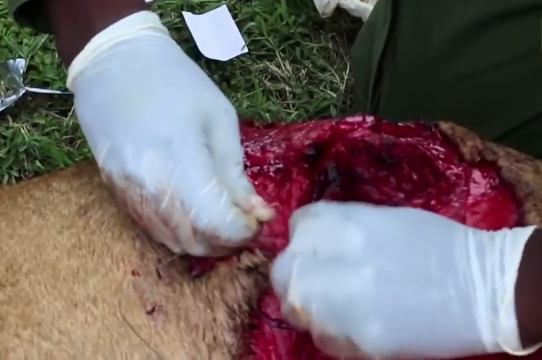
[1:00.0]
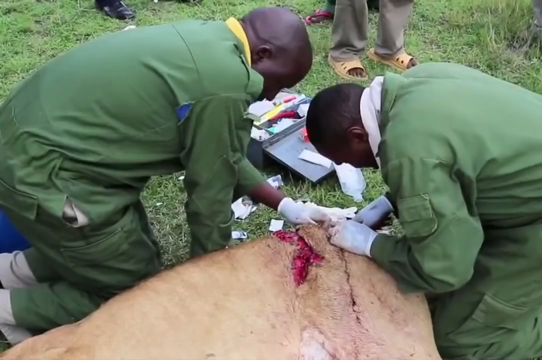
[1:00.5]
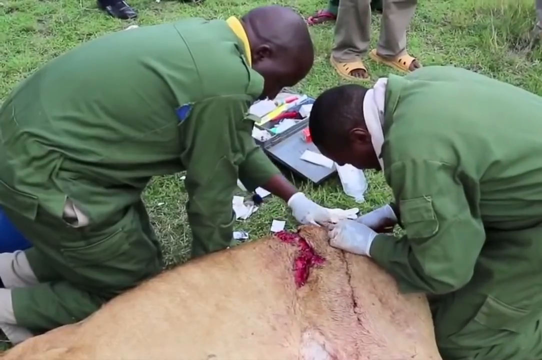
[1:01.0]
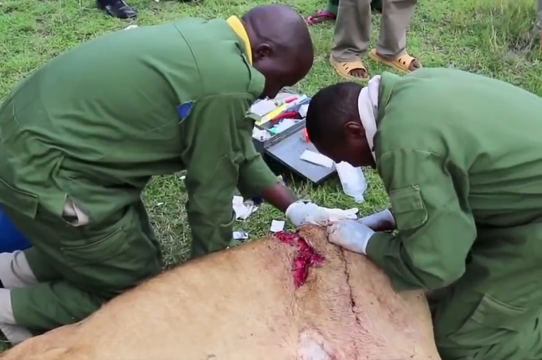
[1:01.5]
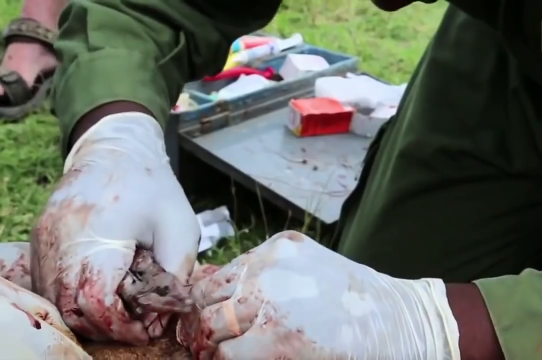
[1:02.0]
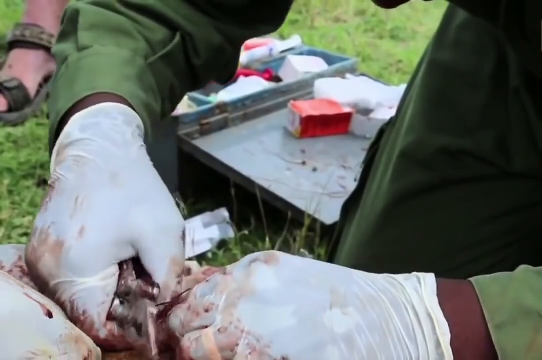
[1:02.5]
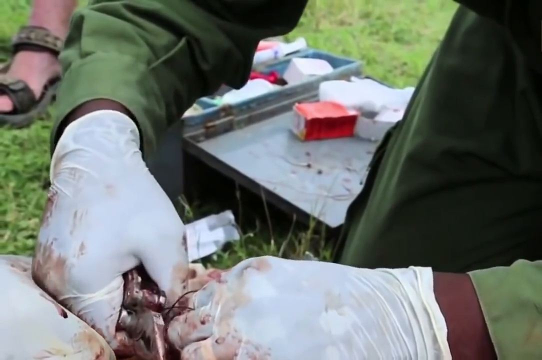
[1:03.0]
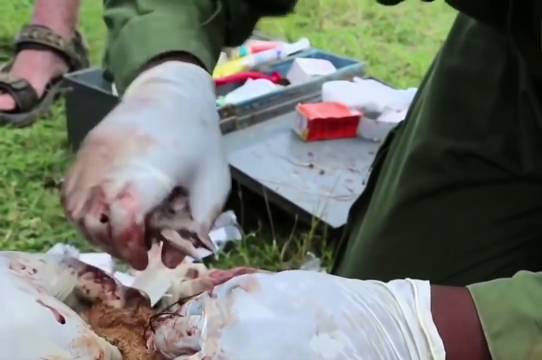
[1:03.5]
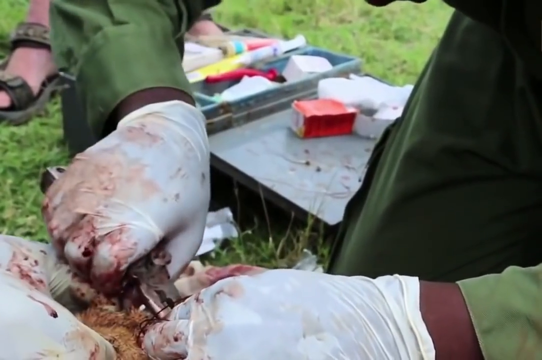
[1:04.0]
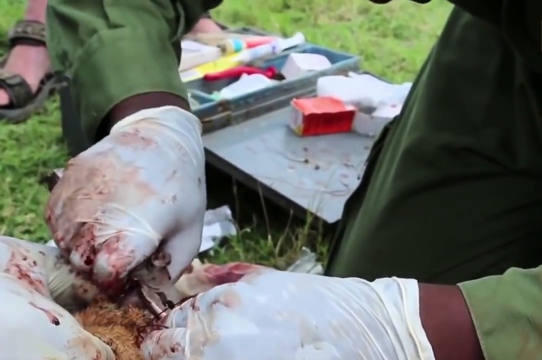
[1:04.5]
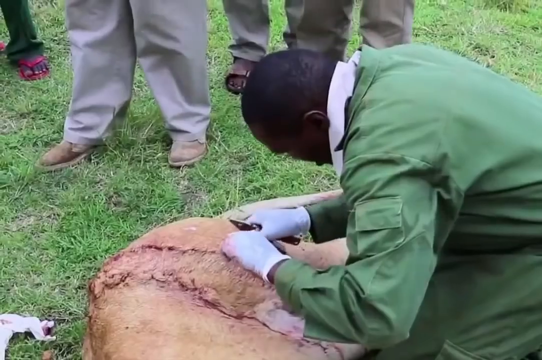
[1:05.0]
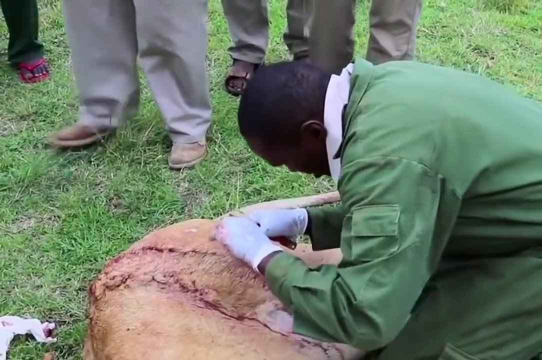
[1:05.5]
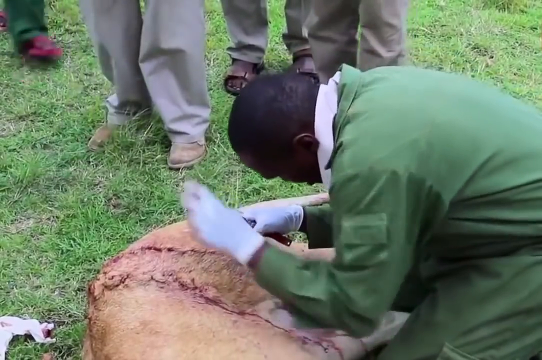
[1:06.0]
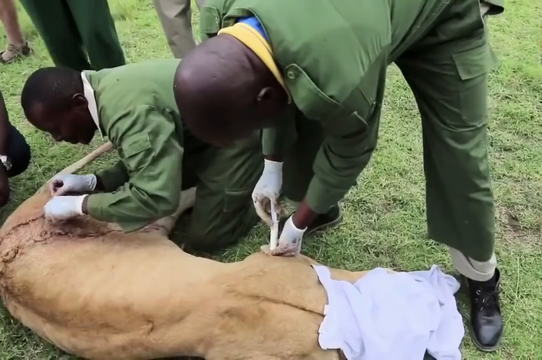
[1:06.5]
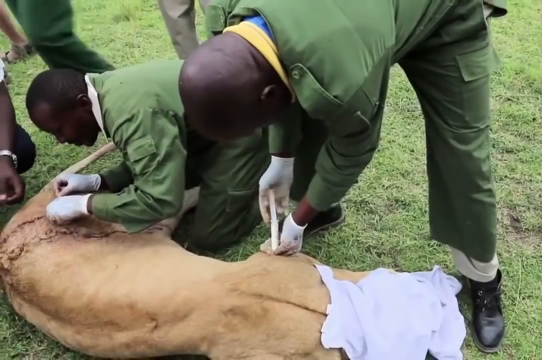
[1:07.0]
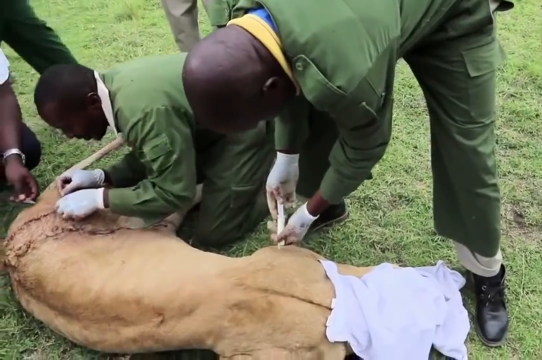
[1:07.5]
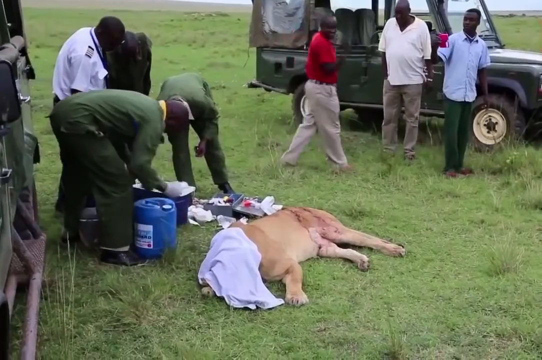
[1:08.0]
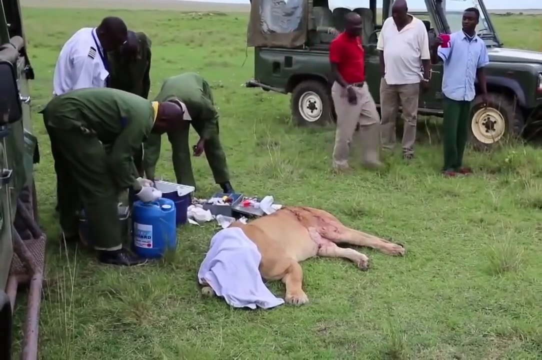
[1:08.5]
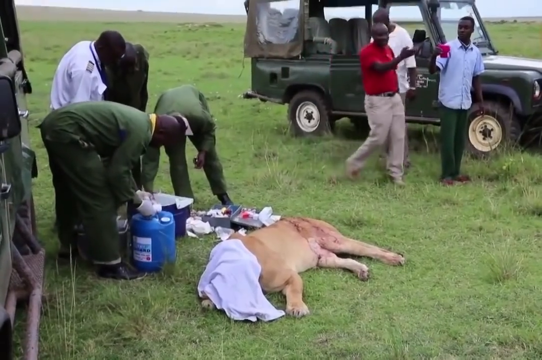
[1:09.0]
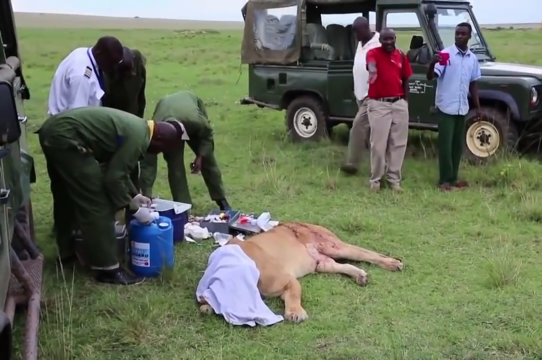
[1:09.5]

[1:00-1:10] One officer in green operates on the open wound of the lion, which lies down with its head covered. He finishes, and the wound is sealed, with another officer in green assisting him. Other men in different kinds of clothing stand nearby: three stand next to one car and four stand next to the other car. One officer injects something into the lioness. Afterward, they take their materials back to their boxes, and the lion is shown lying down with its wound operated on. The officers work with their gloves on.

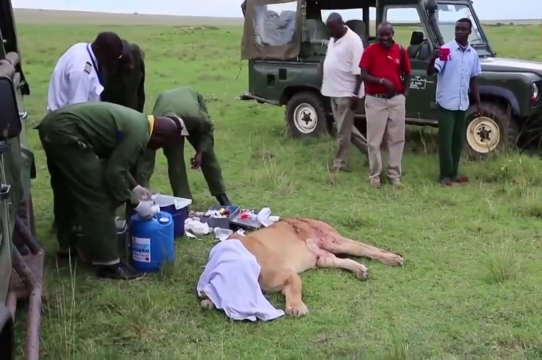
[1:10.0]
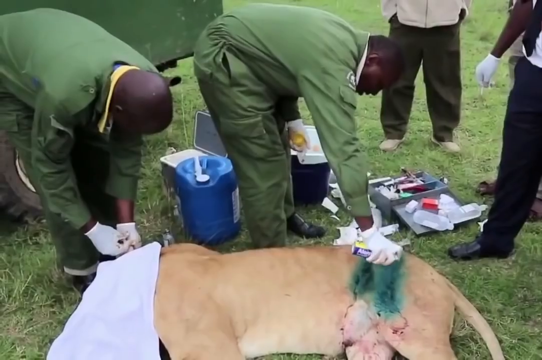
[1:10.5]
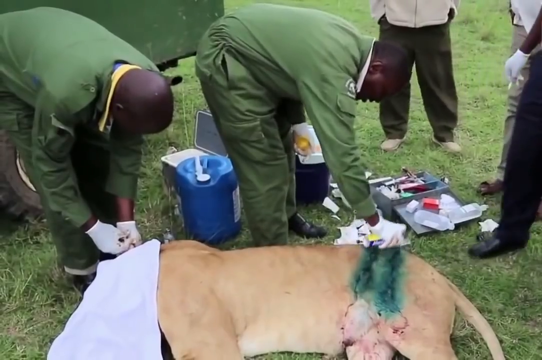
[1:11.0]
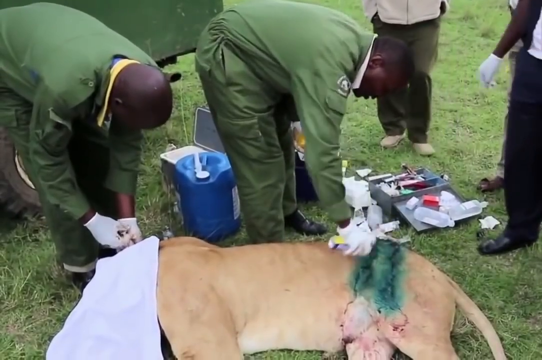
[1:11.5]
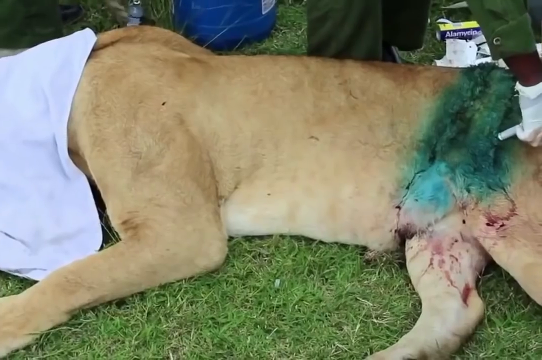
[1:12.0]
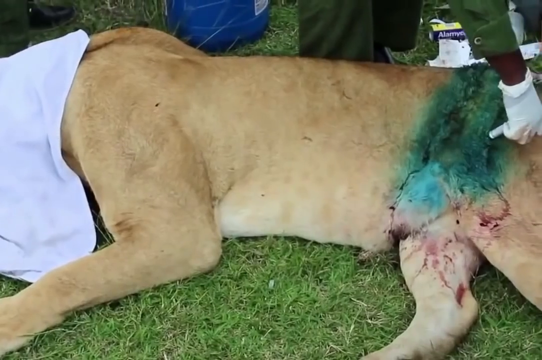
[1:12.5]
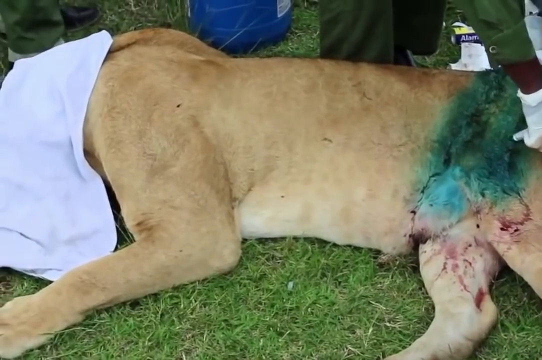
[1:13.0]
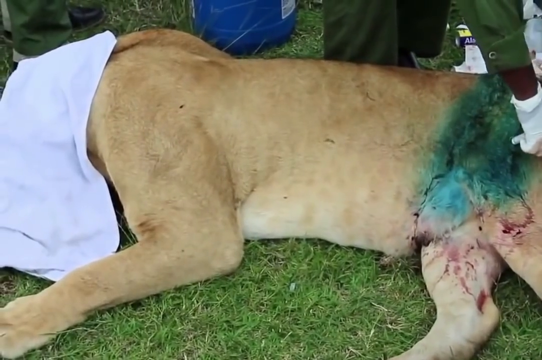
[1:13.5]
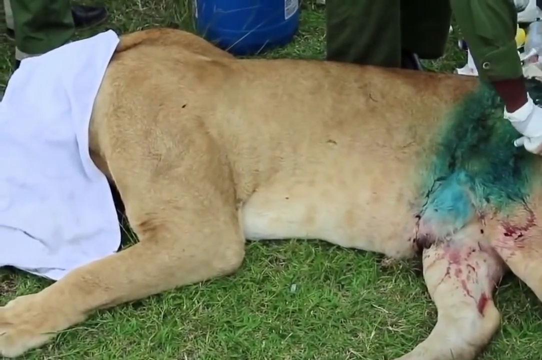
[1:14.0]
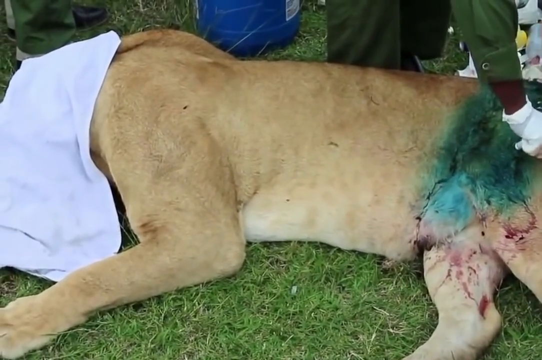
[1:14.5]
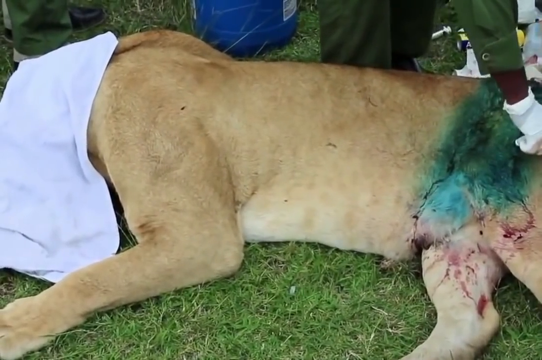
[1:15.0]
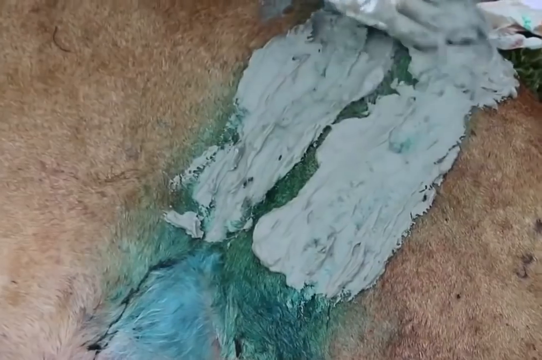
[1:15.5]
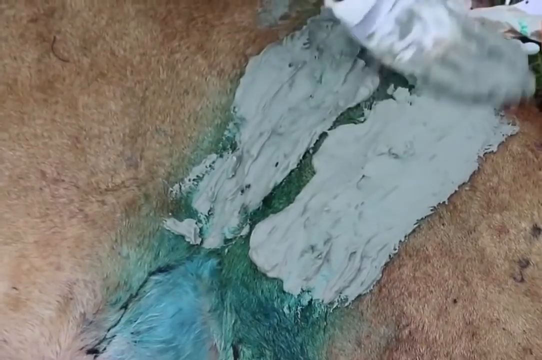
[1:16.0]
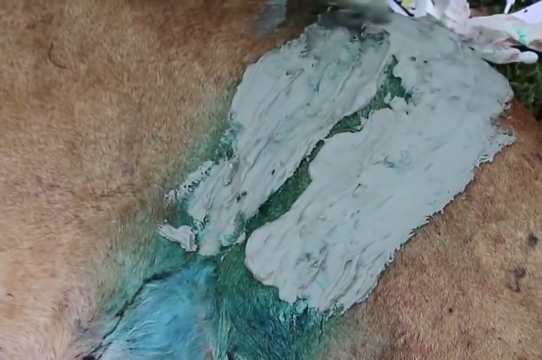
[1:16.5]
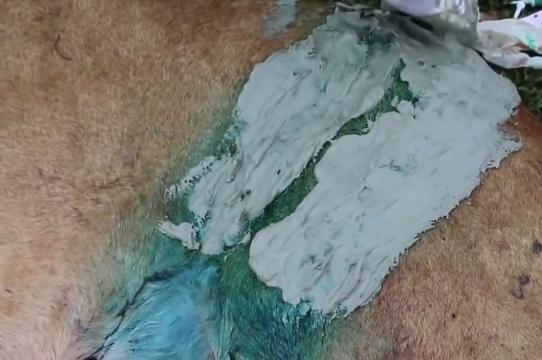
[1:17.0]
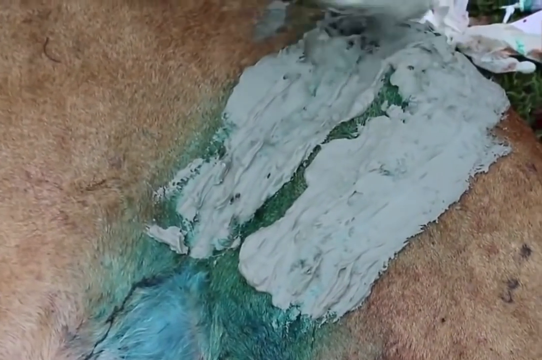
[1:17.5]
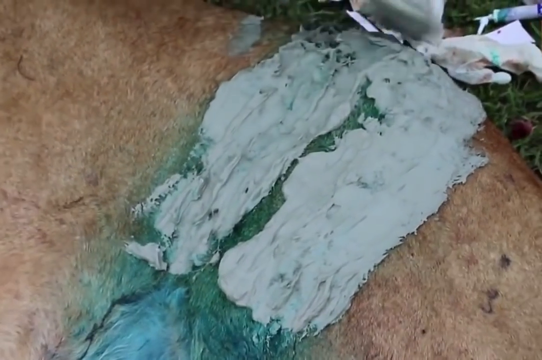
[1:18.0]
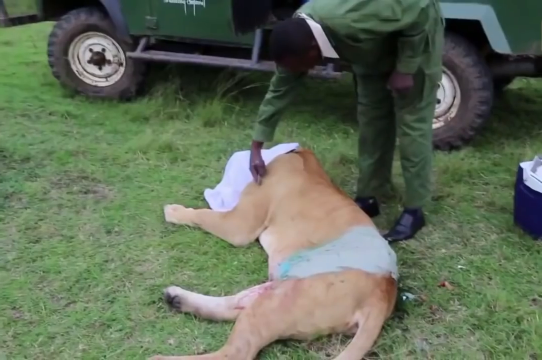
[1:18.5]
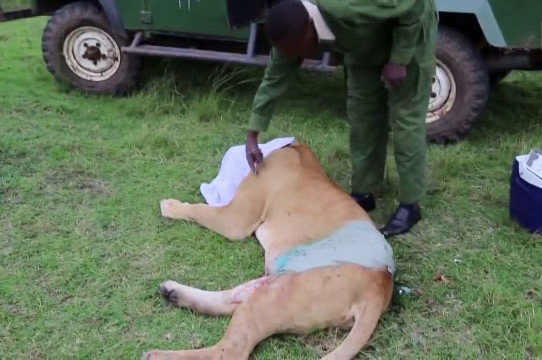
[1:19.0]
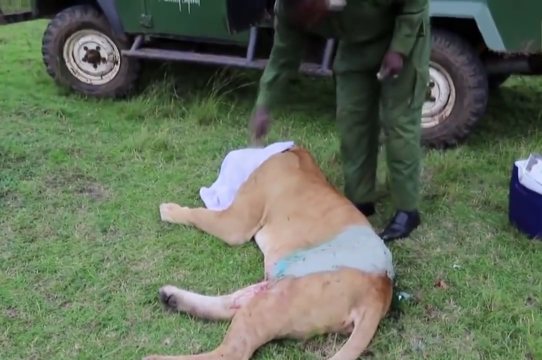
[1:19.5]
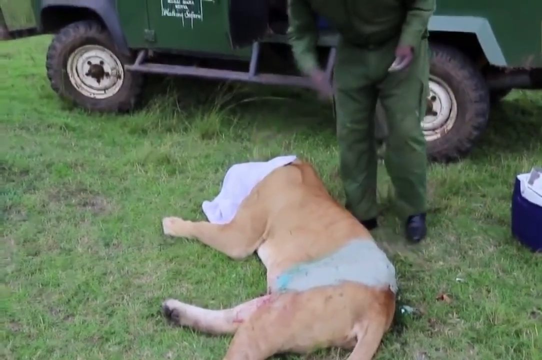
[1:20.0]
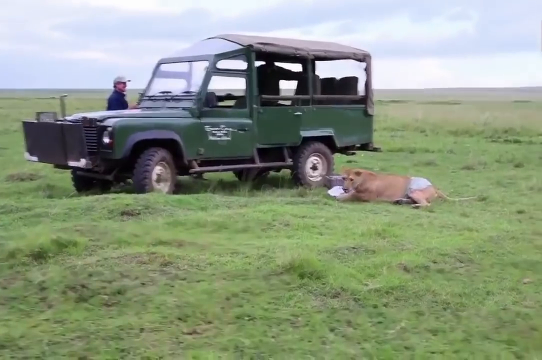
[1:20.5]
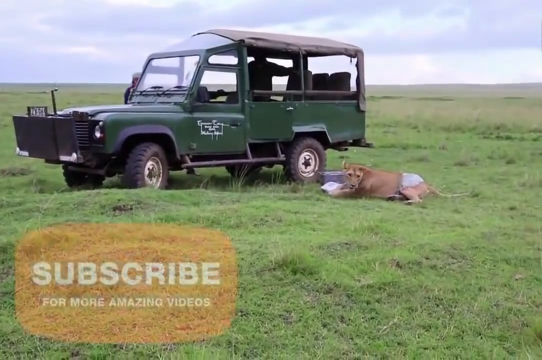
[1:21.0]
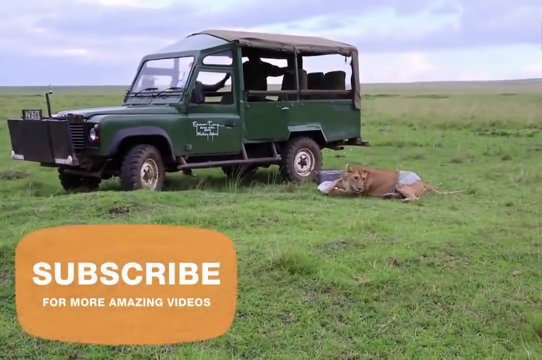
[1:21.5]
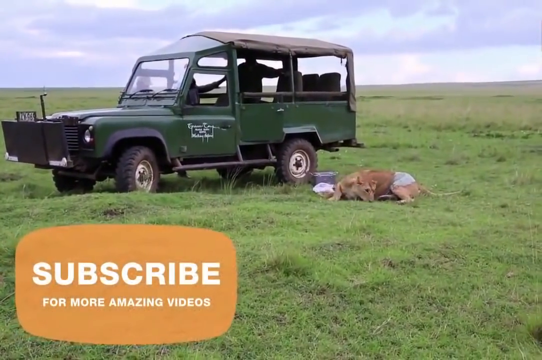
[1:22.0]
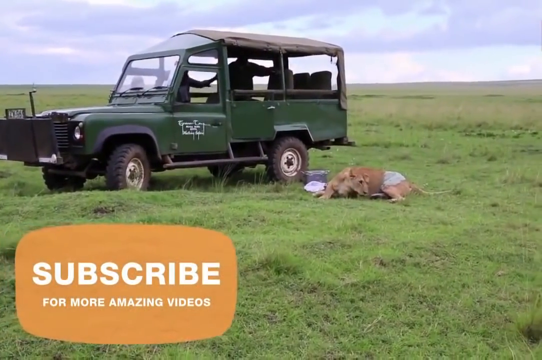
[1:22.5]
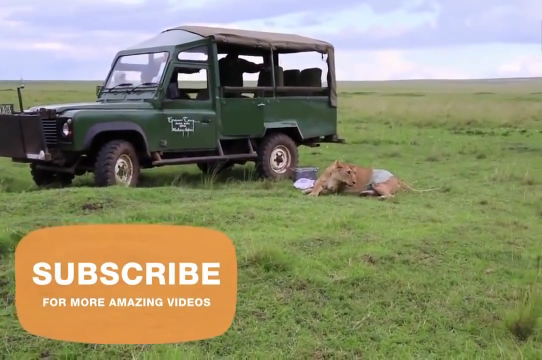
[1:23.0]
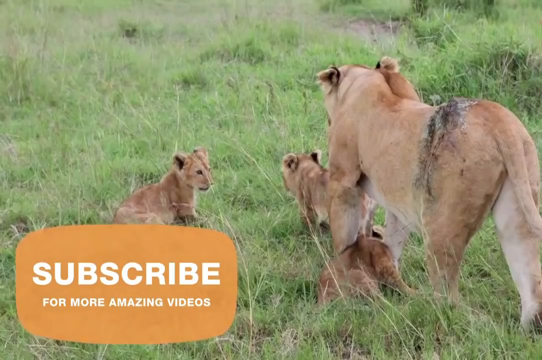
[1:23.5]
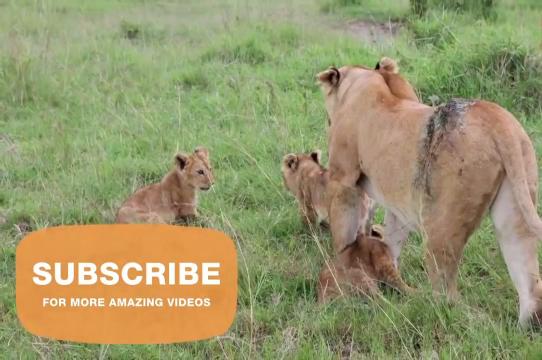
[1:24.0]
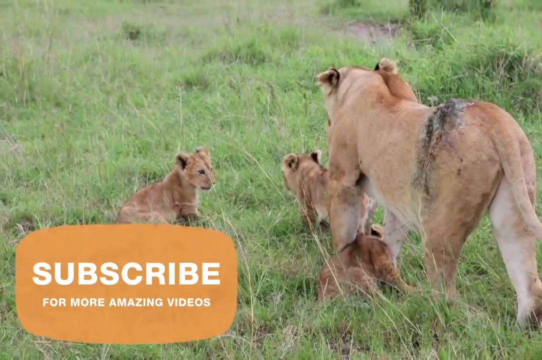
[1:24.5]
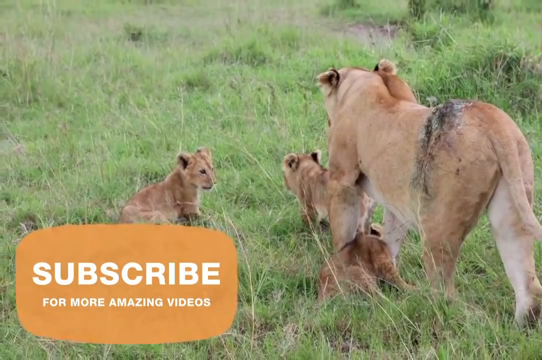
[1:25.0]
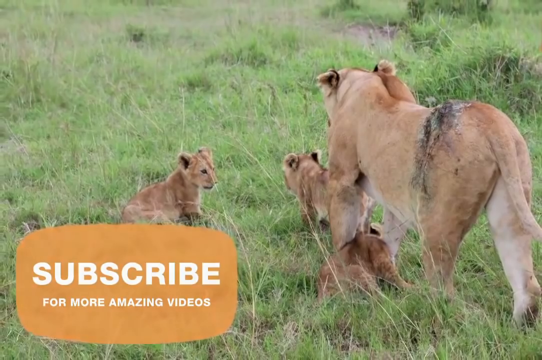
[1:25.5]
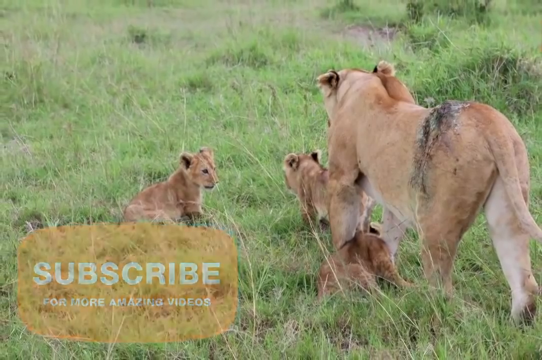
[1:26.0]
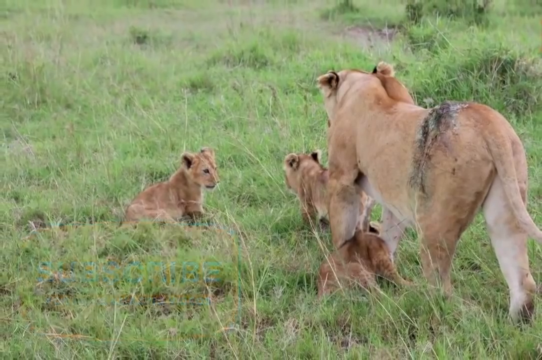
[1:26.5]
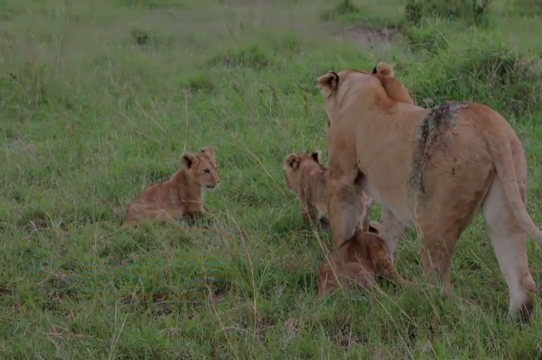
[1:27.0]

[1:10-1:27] The lion lies down with its wound attended to. The officers apply a green substance and a whitish substance to the wound, then go back to the green car they came in. The lion then wakes up and walks back to the other lions. The environment is very green and the sky is clear and blue.